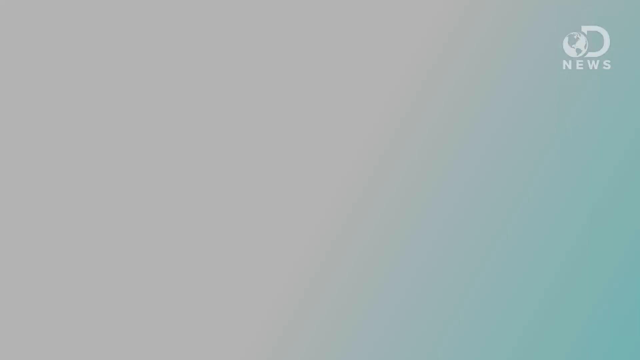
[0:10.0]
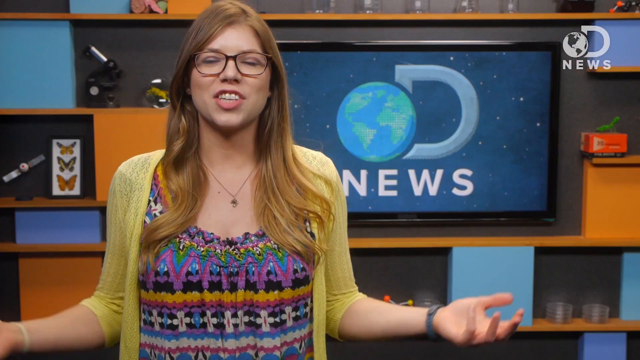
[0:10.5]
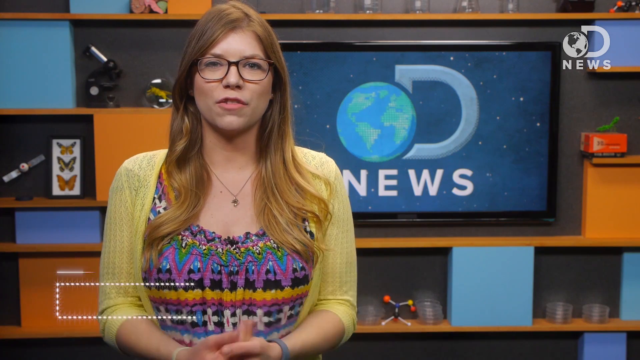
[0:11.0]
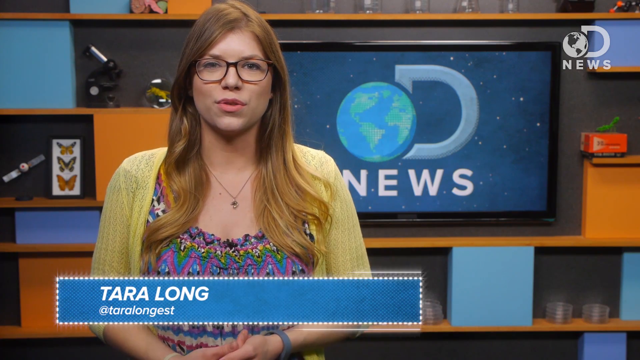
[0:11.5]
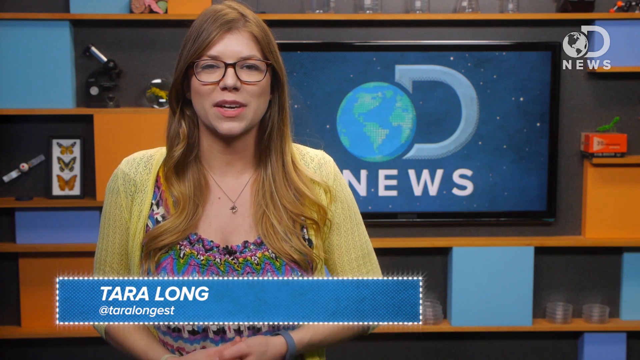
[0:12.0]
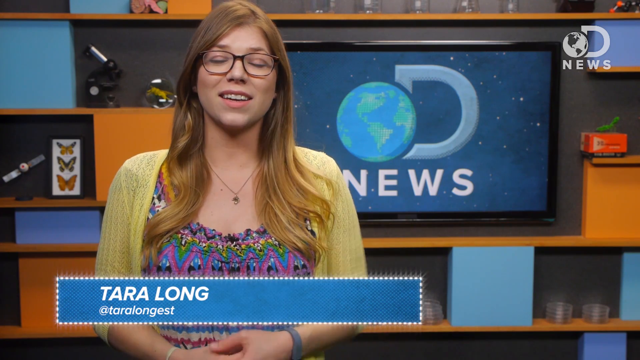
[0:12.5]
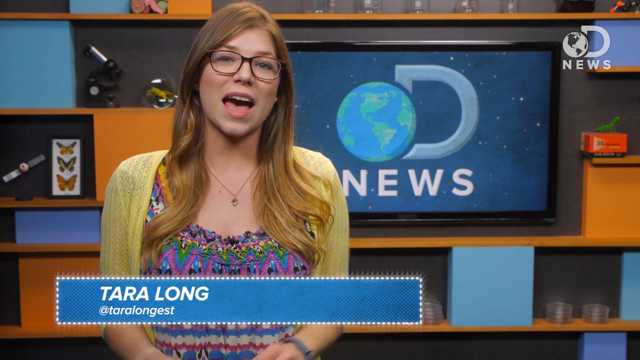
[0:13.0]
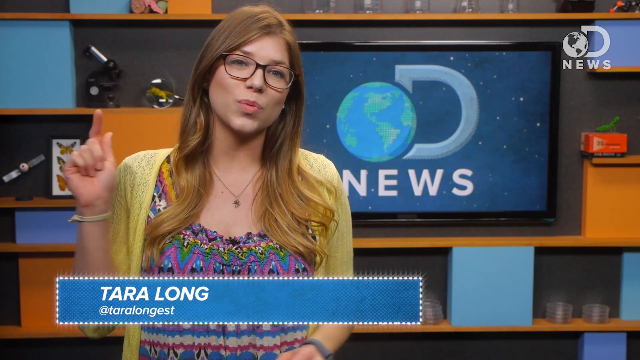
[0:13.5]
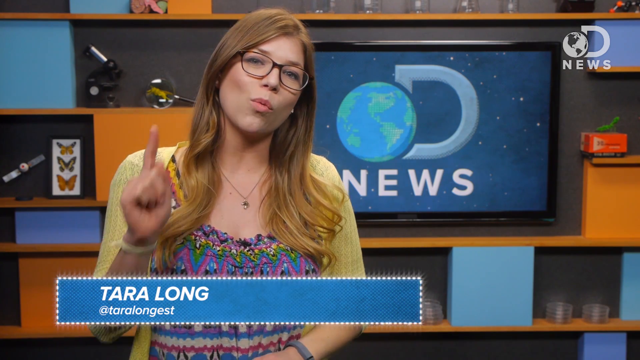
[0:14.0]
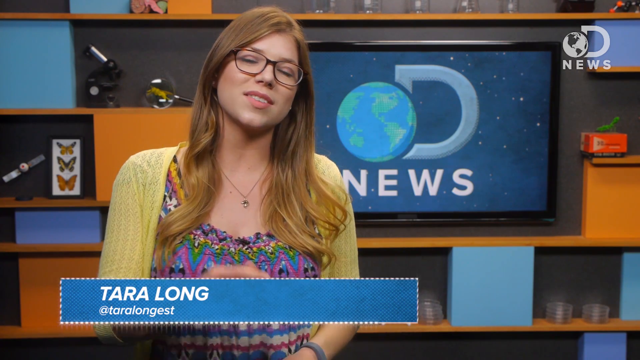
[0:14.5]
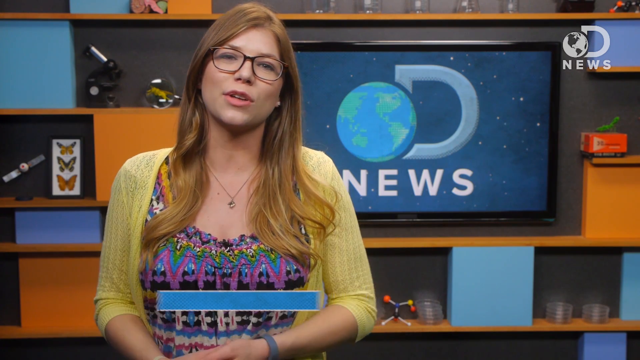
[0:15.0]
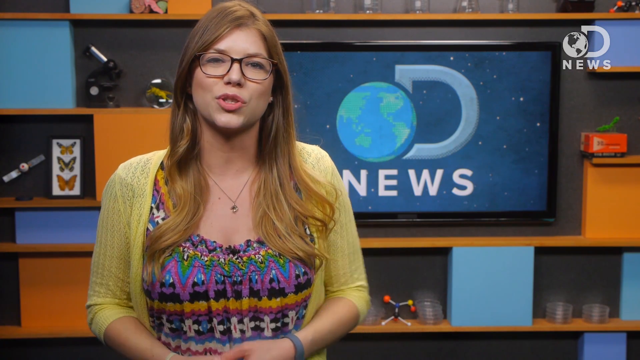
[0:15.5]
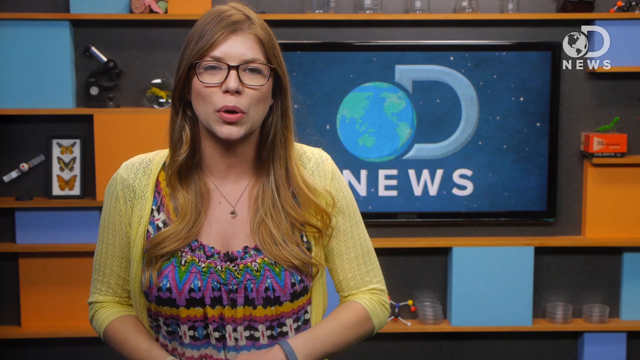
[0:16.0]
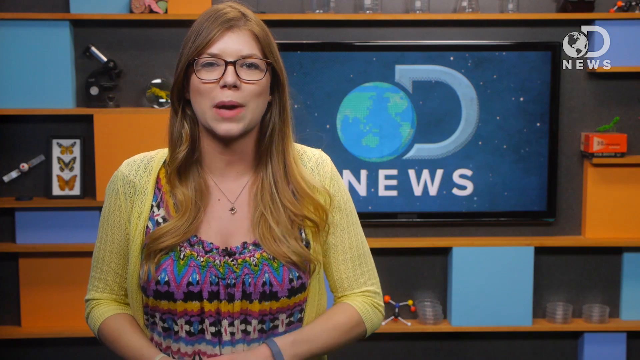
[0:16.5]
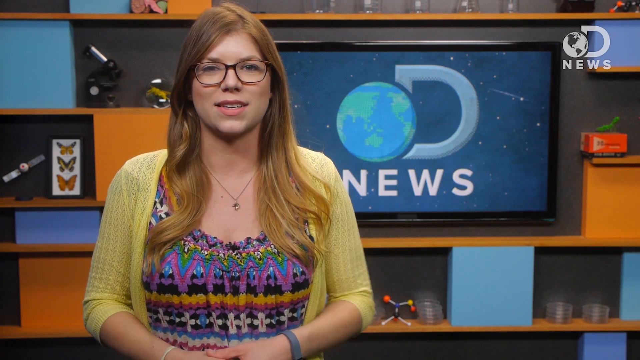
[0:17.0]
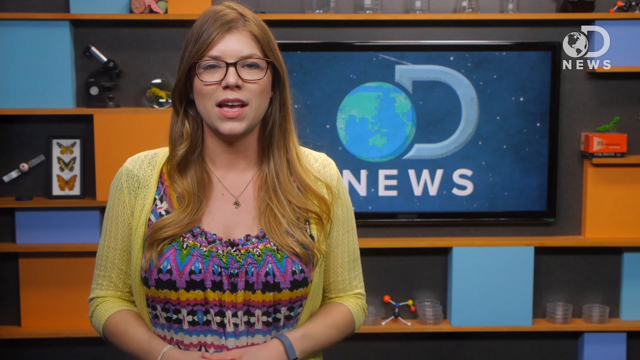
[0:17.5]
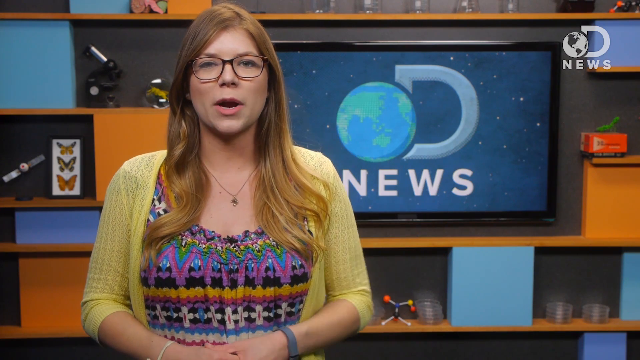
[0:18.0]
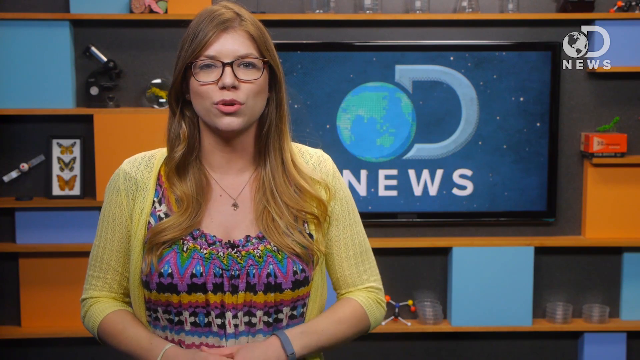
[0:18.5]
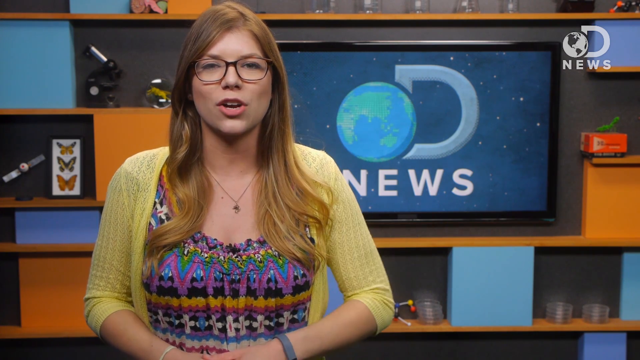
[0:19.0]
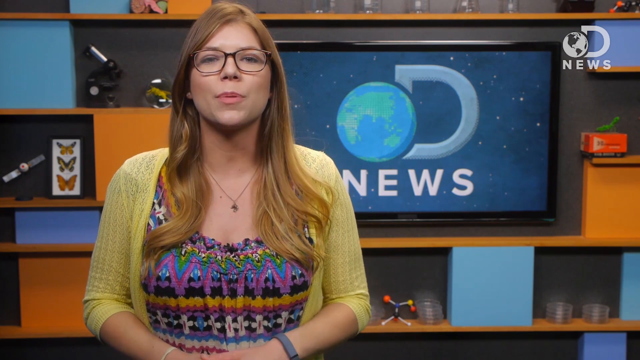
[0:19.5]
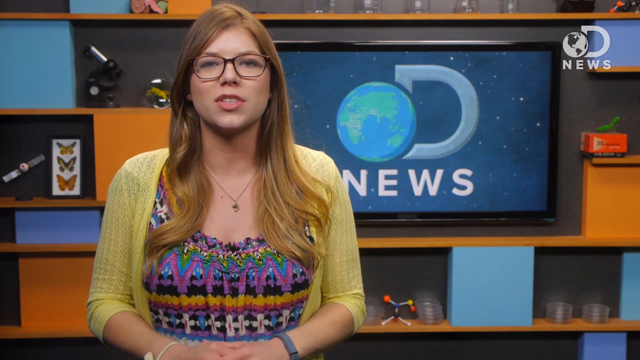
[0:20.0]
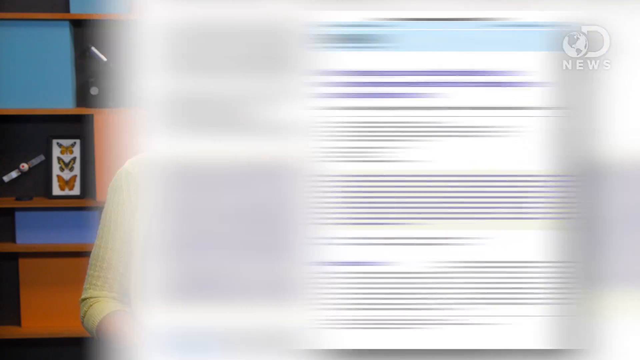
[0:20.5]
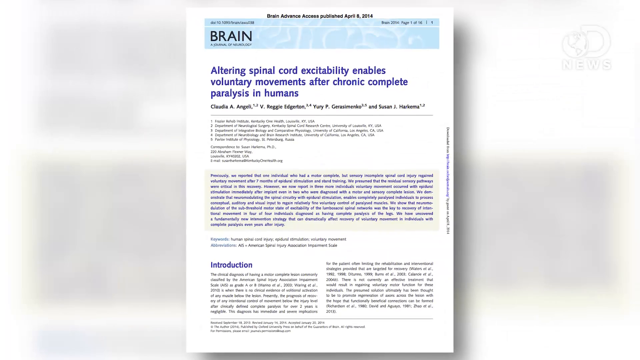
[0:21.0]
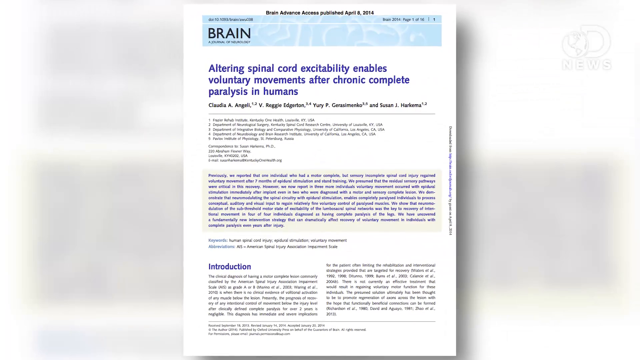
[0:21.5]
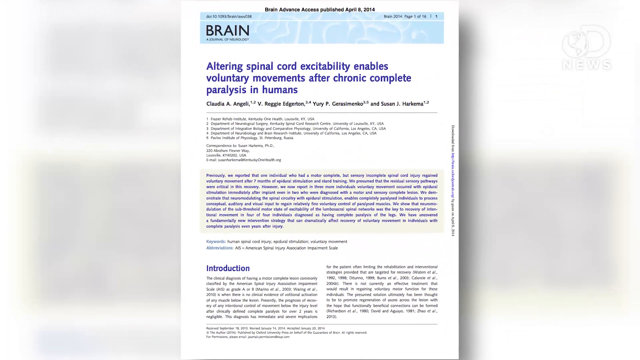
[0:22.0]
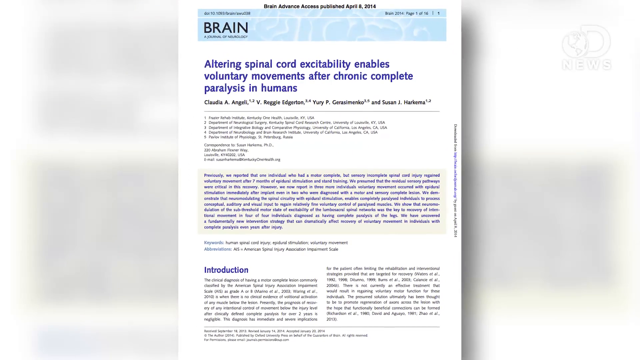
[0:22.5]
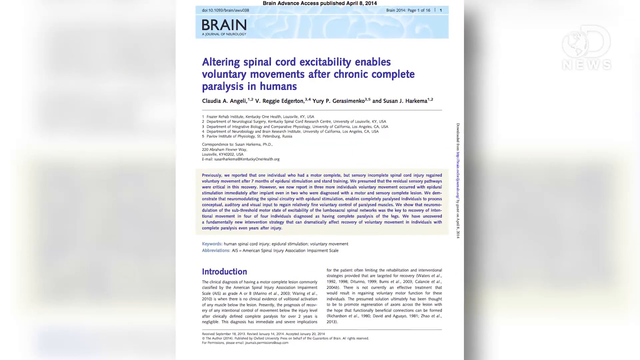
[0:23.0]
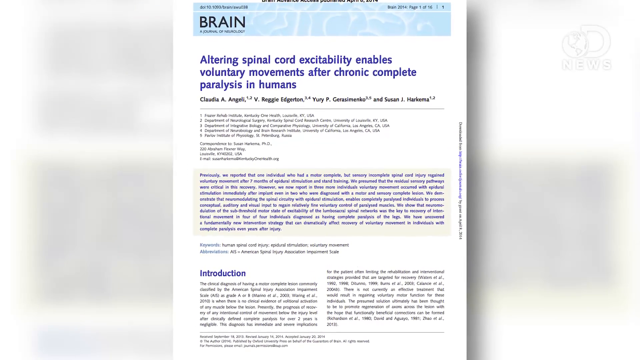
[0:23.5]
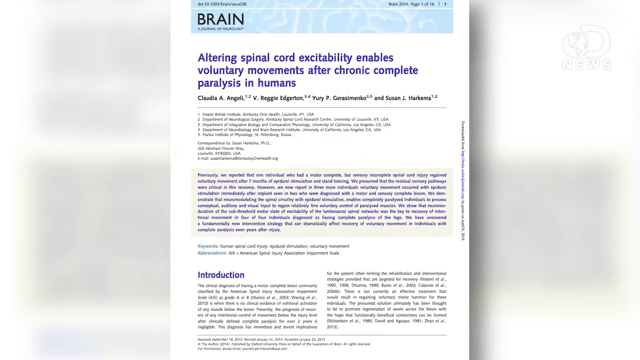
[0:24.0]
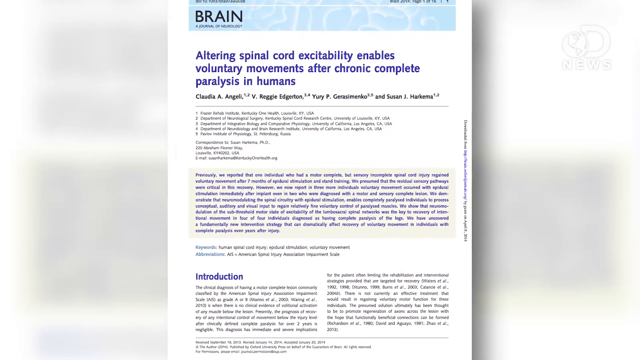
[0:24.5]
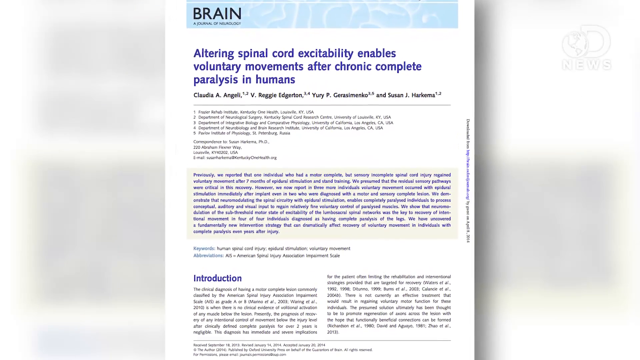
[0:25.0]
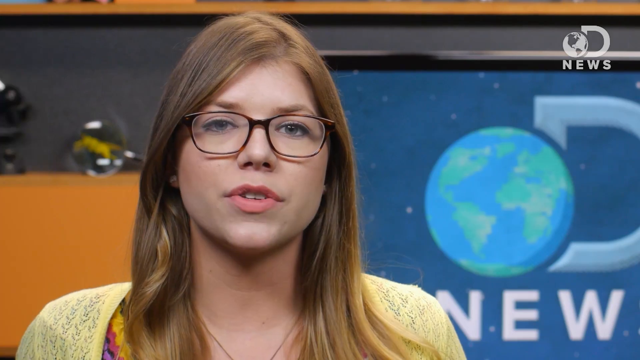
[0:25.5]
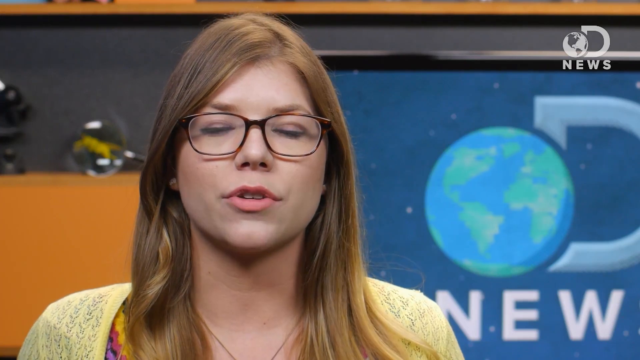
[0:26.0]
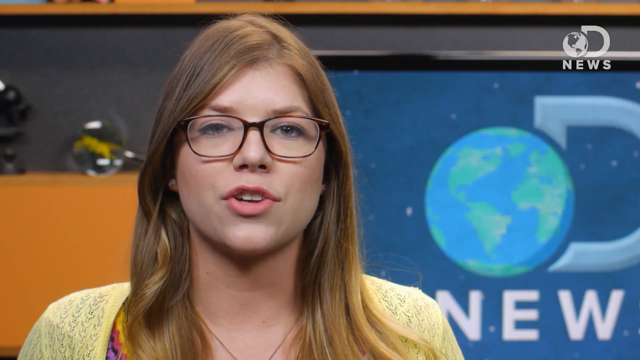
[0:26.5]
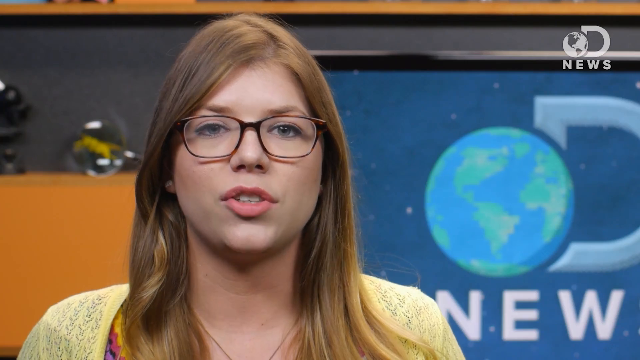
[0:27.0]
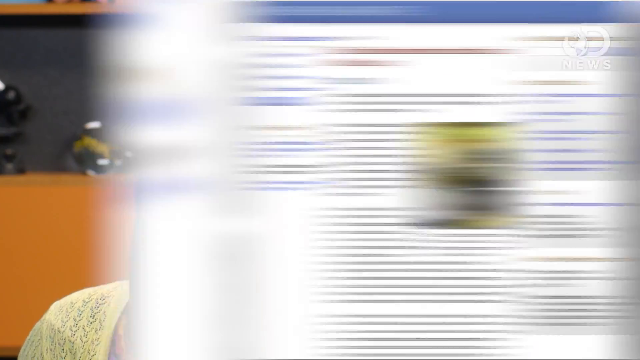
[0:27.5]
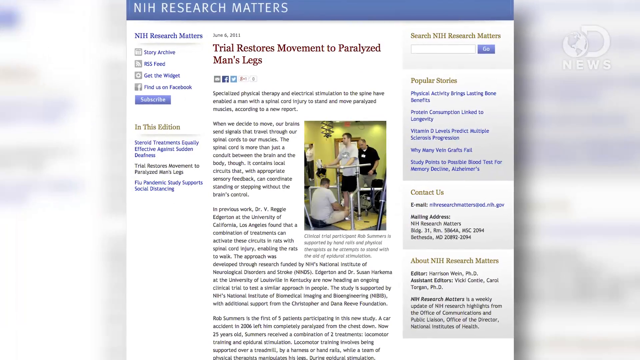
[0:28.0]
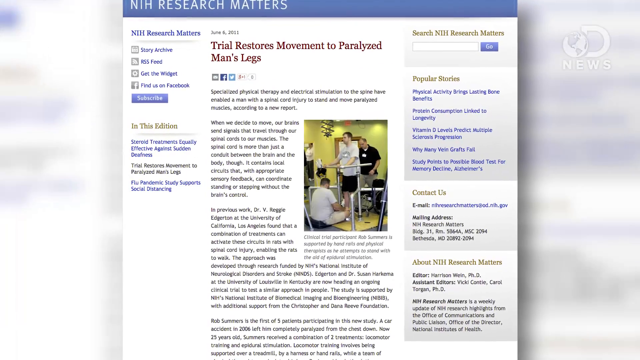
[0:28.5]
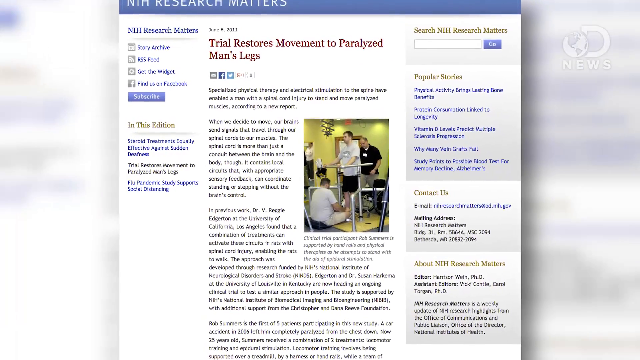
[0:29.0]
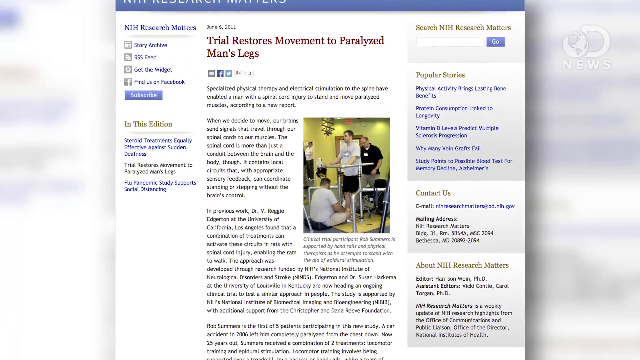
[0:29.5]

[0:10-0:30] After a brief transitional screen, the woman is back in the Discovery News studio with the TV screen and the orange, blue, and black shelving behind her. She throws her arms out with her forearms held up at a 90-degree angle to her body, palms turned upward and fingers curled slightly, then quickly brings her hands back together in front of her. As she speaks into the camera with her hands held in front of her, she bounces her elbows slightly out from her body. A chyron appears at the bottom identifying her as Tara Long and giving her social media handle, "@taralongist." She lifts her right hand, palm facing forward, three fingers curled down and index finger and thumb extended and pinching together; from that gesture she moves her hand downward and folds her thumb in to point forward with her index finger. She drops her hand back down in front of her and tilts her head slightly to her left as she continues to speak, bouncing her elbows against her sides for the next several seconds. A white background then flies in from the left-hand side of the screen, overlaid with the title page of a research article entitled "Altering Spinal Cord Excitability Enables Voluntary Movements After Chronic Complete Paralysis in Humans." The camera zooms in for about five seconds, then the article flies off the left side of the screen. There is a brief cut back to the woman in the studio, filmed from the shoulders up, and then another article flies in from the right-hand side of the screen, titled "Trial Restores Movement to Paralyzed Man's Legs."